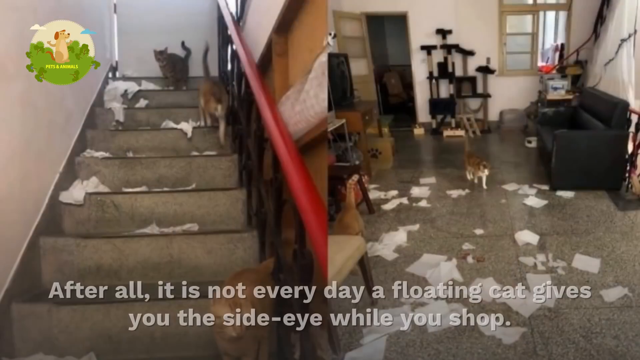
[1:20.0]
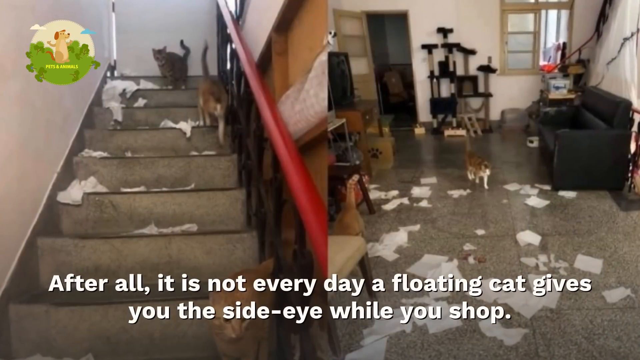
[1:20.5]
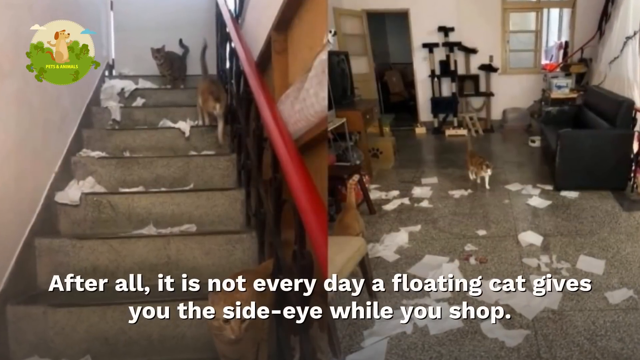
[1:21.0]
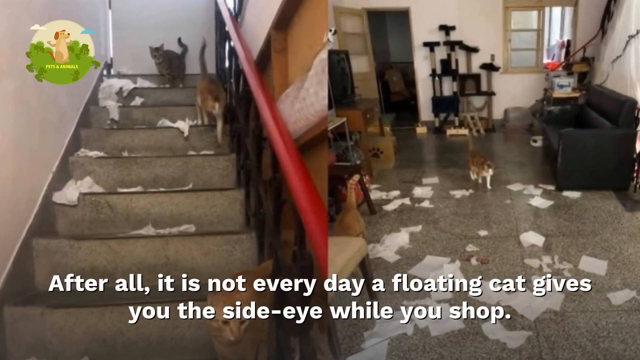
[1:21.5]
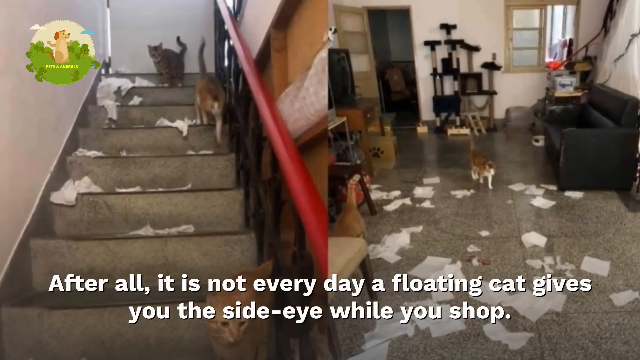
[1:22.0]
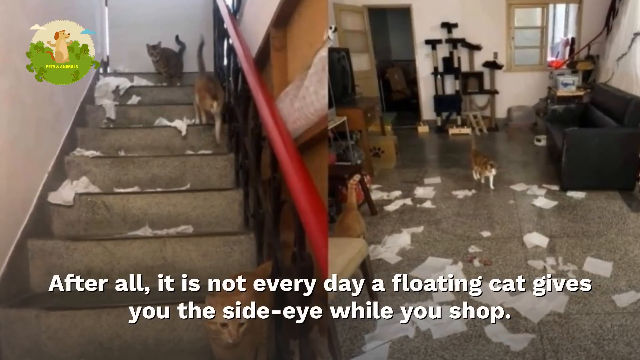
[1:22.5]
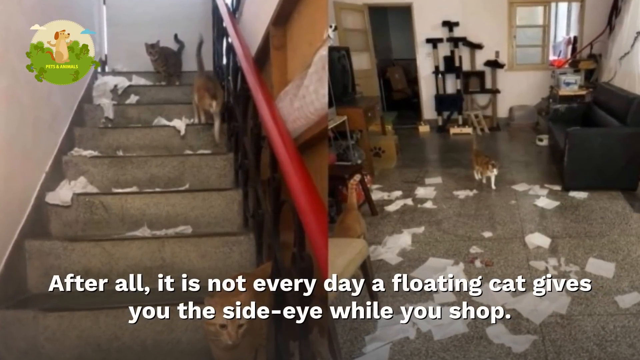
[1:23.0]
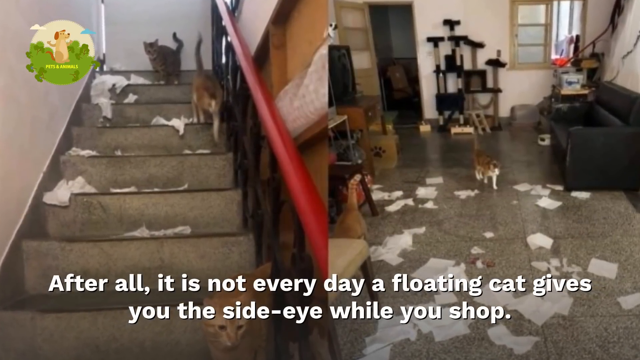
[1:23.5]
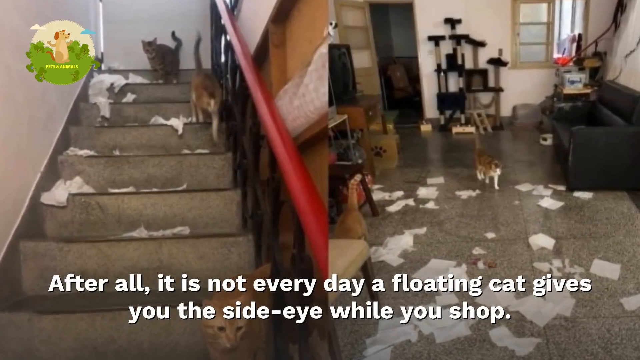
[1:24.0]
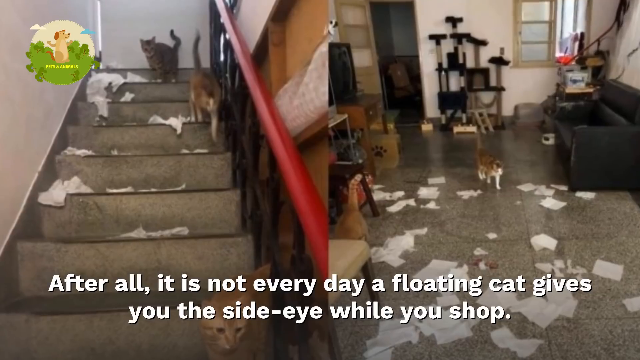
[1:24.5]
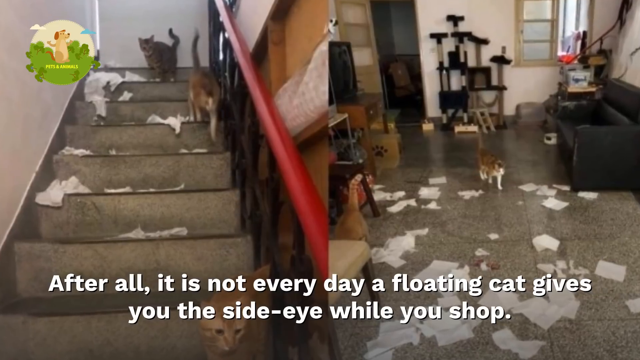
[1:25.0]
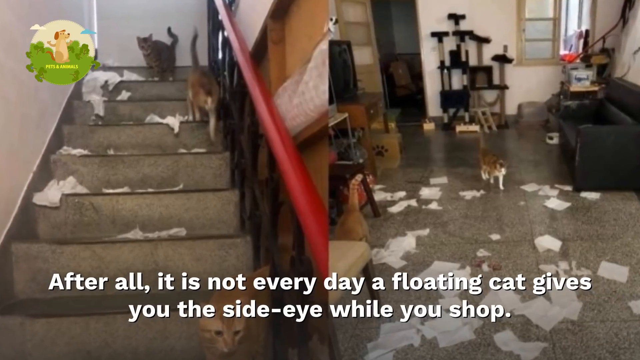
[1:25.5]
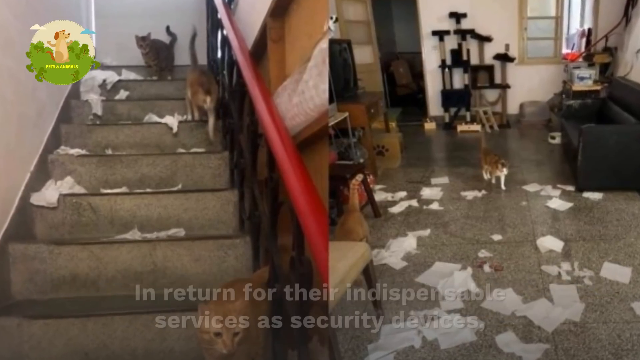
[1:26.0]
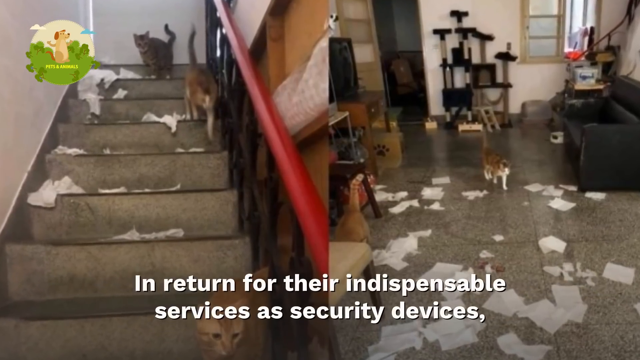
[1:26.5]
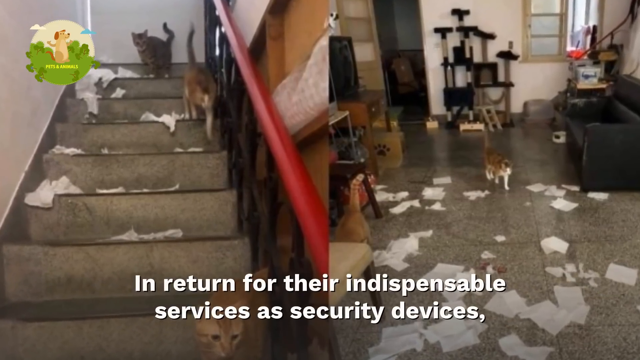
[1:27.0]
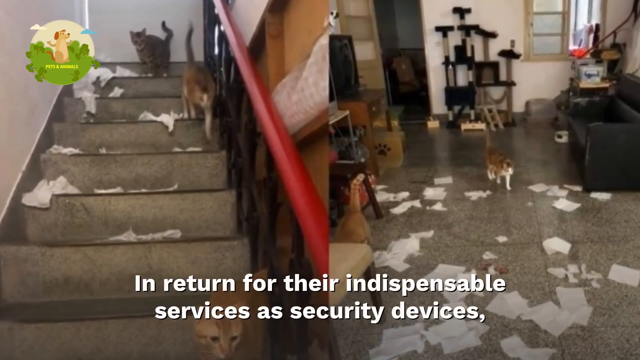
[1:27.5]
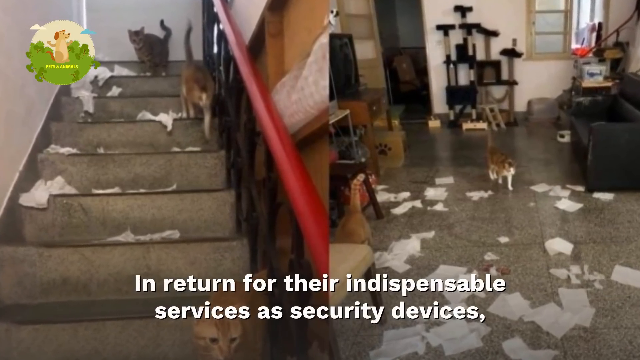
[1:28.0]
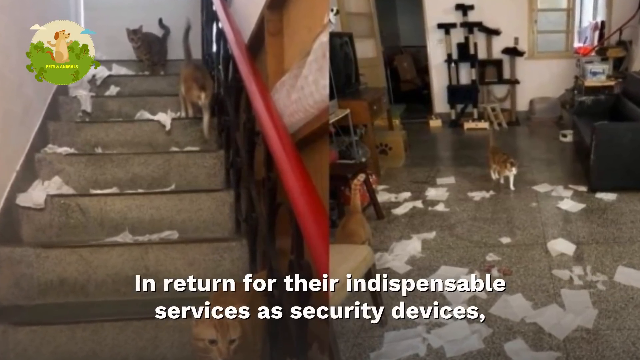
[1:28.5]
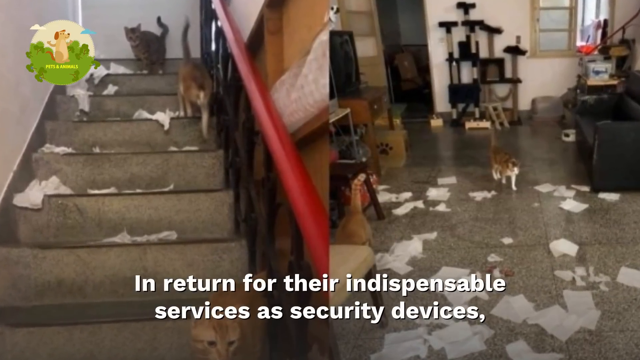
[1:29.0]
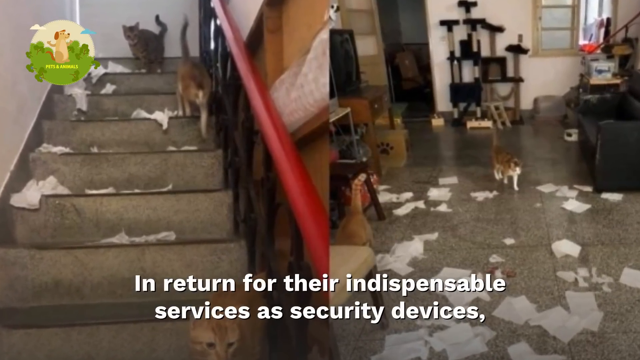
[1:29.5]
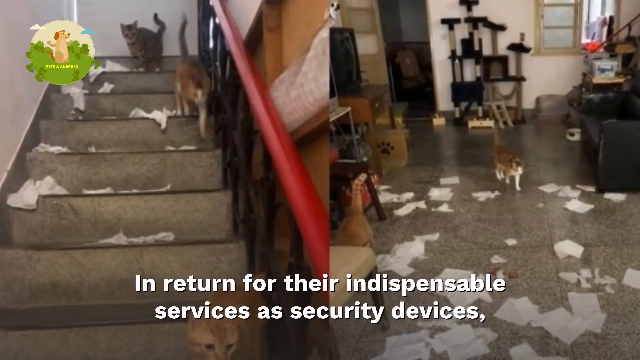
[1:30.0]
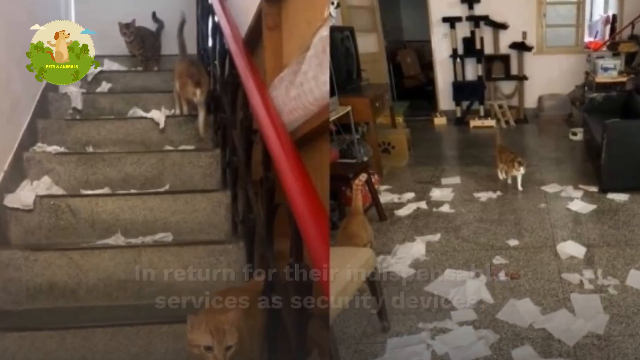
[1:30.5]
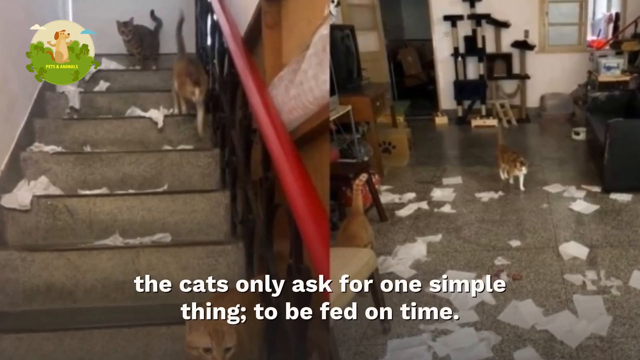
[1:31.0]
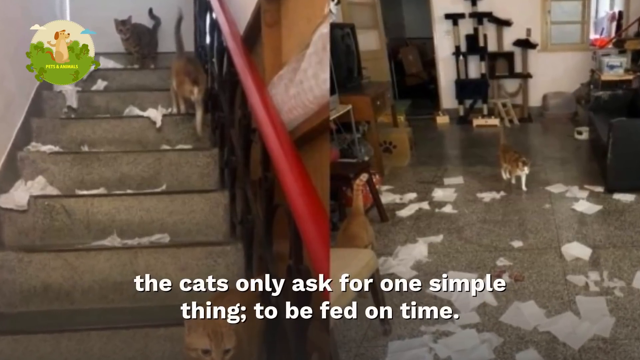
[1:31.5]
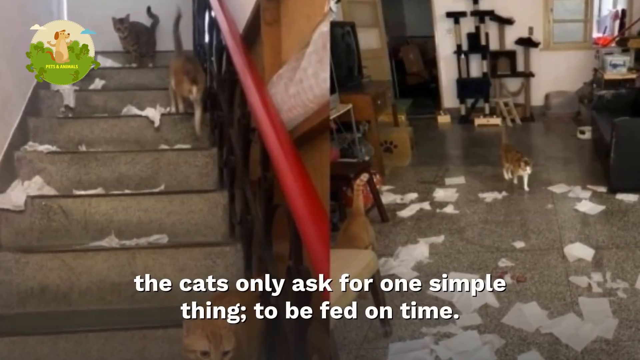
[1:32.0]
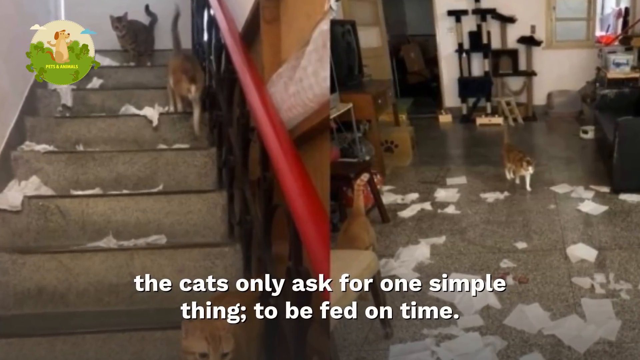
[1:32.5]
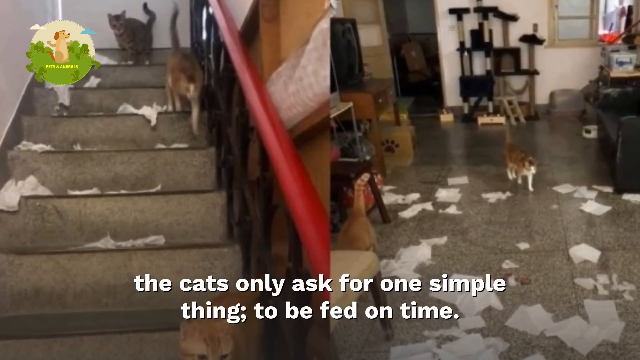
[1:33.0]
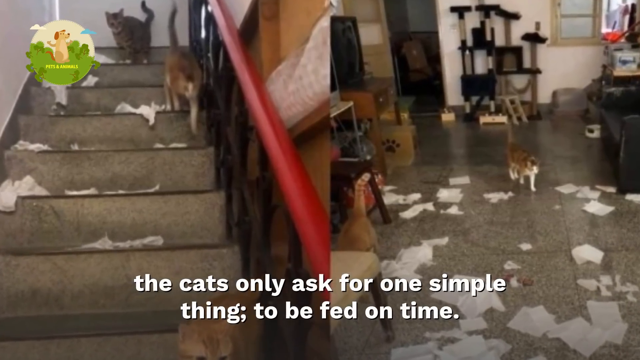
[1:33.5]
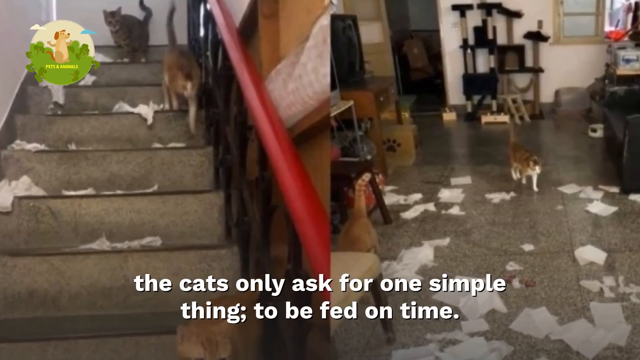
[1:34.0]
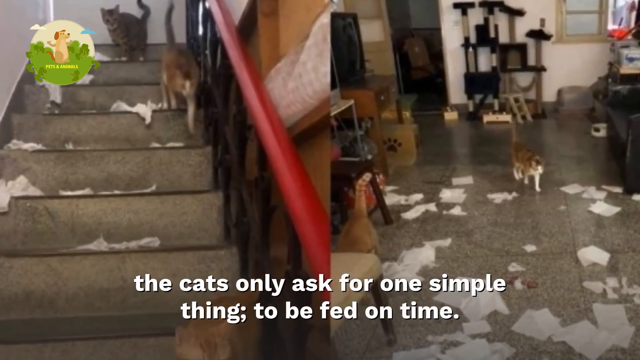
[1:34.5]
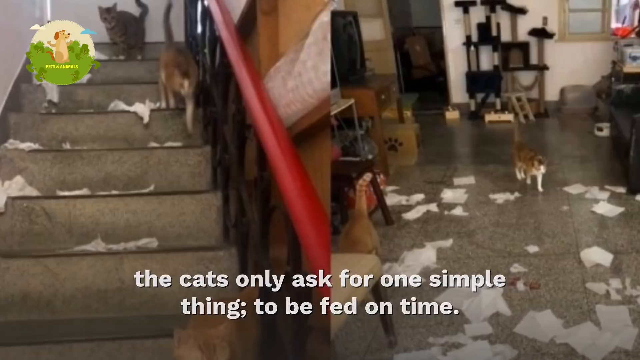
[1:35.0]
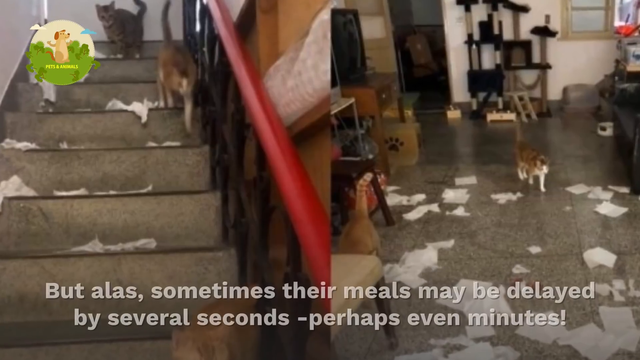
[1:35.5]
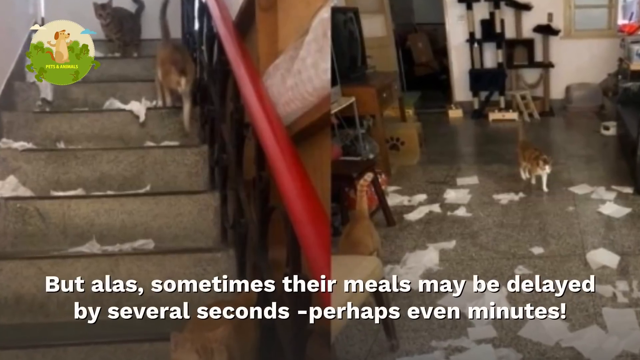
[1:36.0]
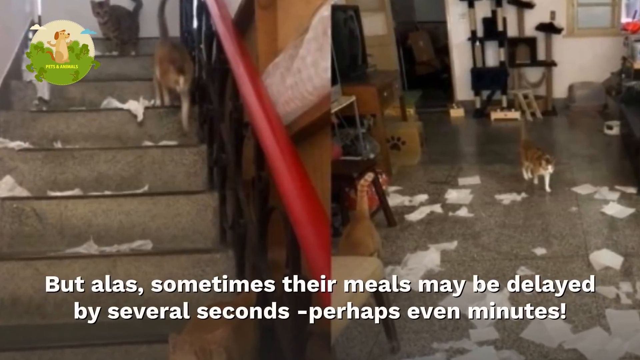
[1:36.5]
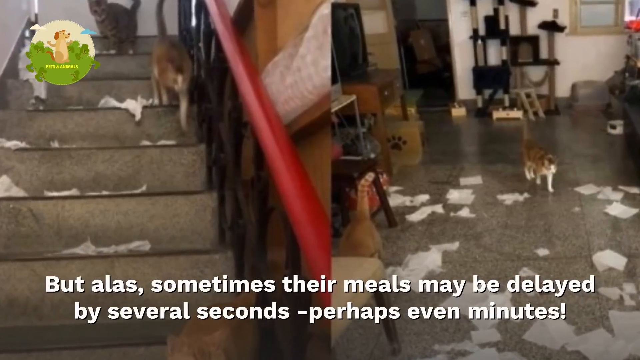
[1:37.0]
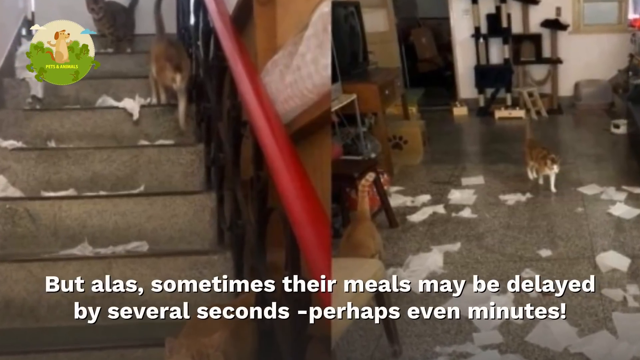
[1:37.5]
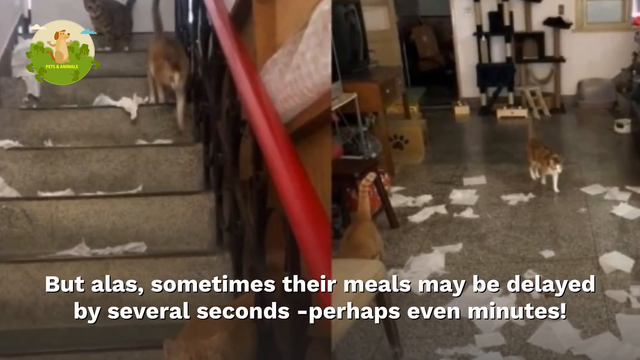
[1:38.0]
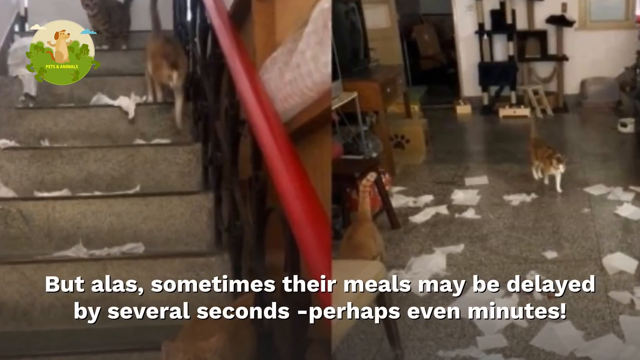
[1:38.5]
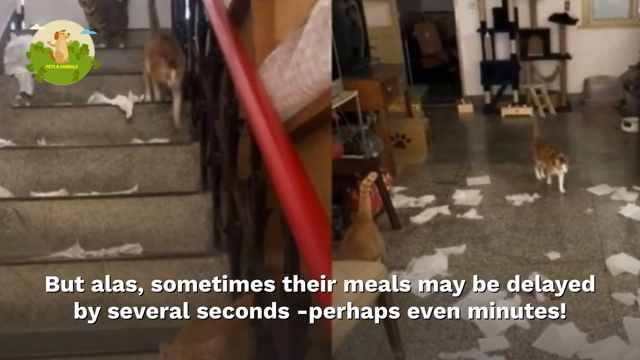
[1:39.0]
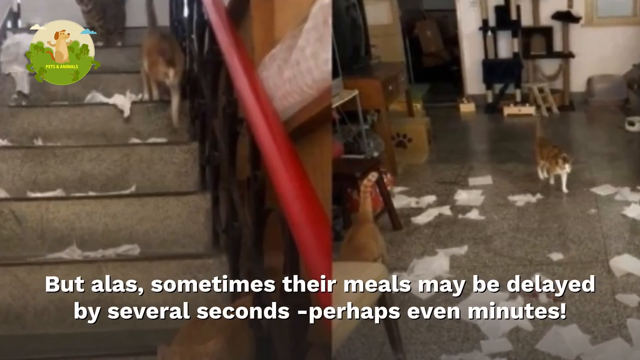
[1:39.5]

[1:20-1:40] Some cats come down steps that are very trashed: papers are all over, and there is trash on the steps and in the main room. One cat is over on the right in the main part of the room. The text reads "after all, it is not every day a floating cat gives you the side eye while you shop." Then it says "in return for their indispensable services as security devices, the cats only ask for one simple thing to be fed on time," followed by "but alas, sometimes their meals may be delayed by several seconds, perhaps even minutes." The steps have a wooden handrail that looks kind of red, and the posts are black.